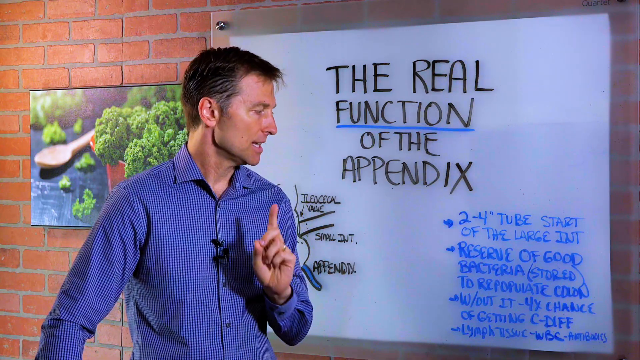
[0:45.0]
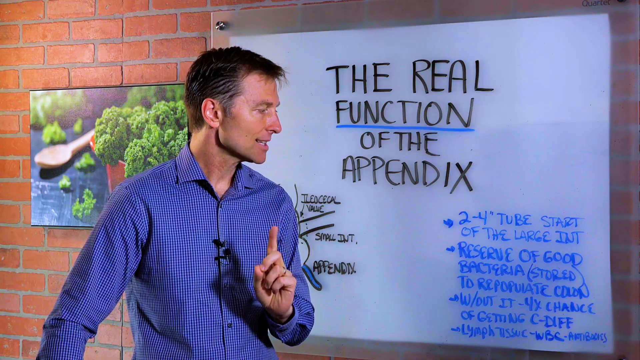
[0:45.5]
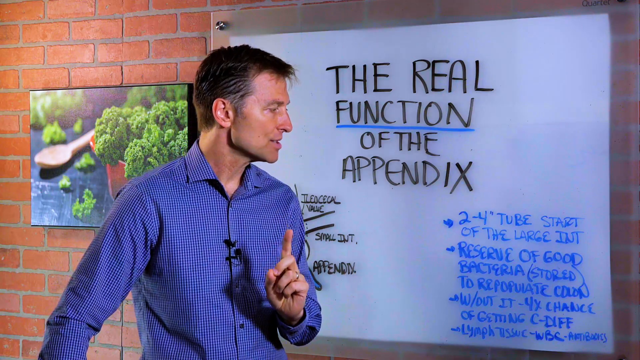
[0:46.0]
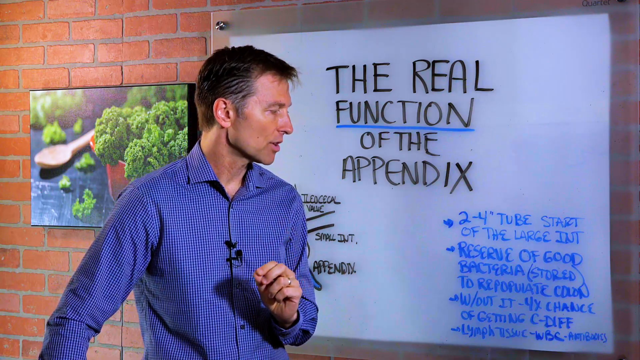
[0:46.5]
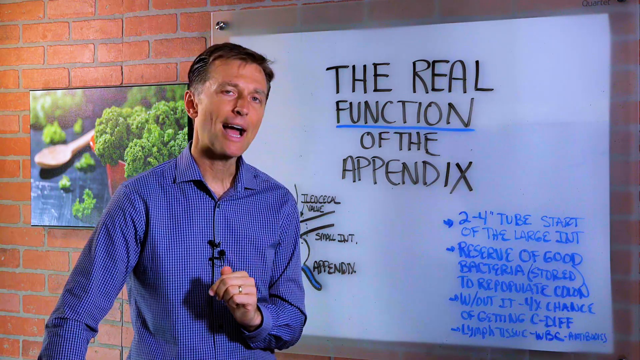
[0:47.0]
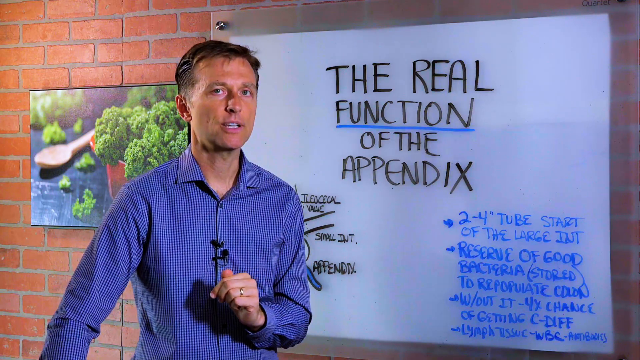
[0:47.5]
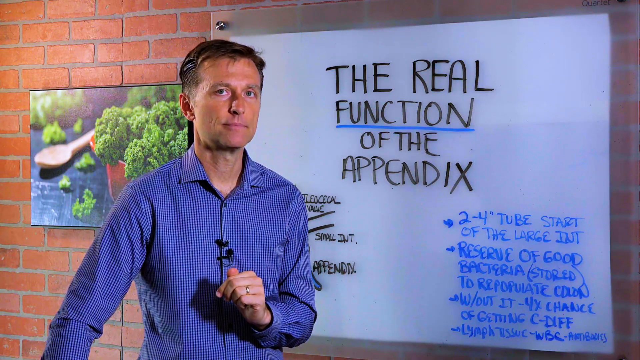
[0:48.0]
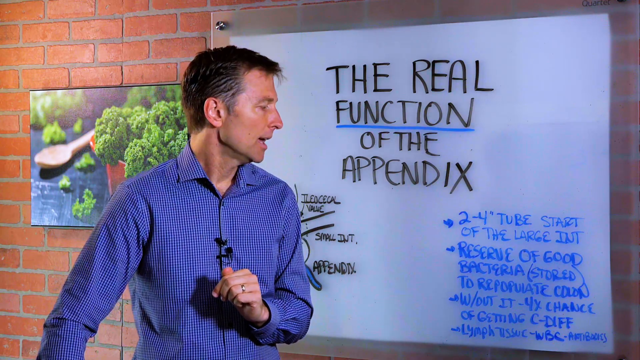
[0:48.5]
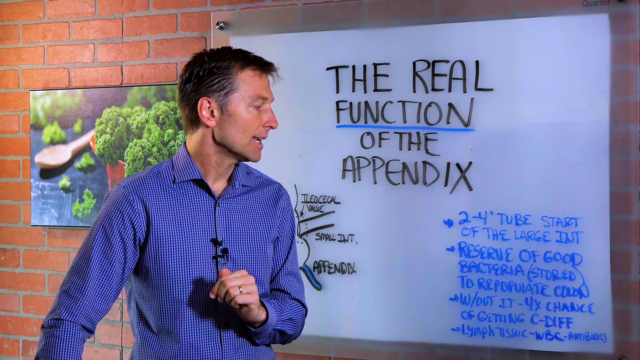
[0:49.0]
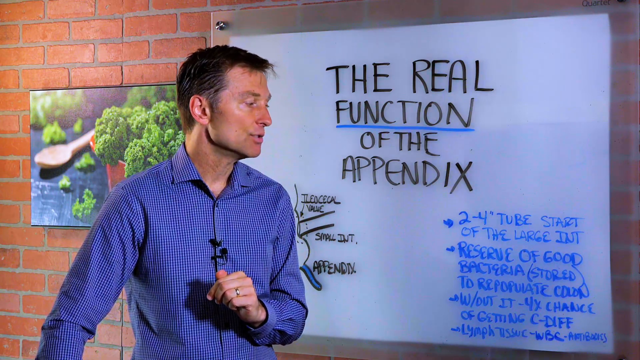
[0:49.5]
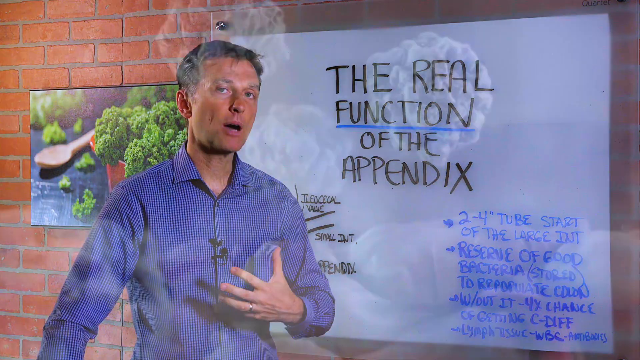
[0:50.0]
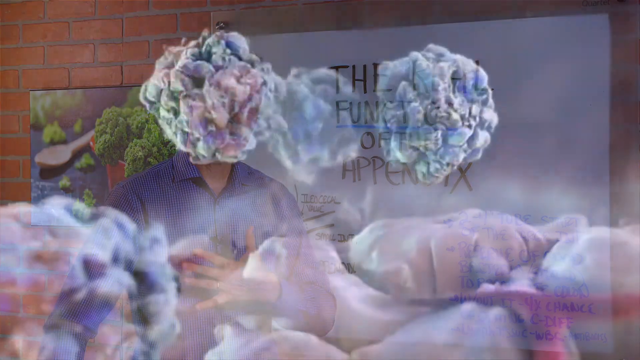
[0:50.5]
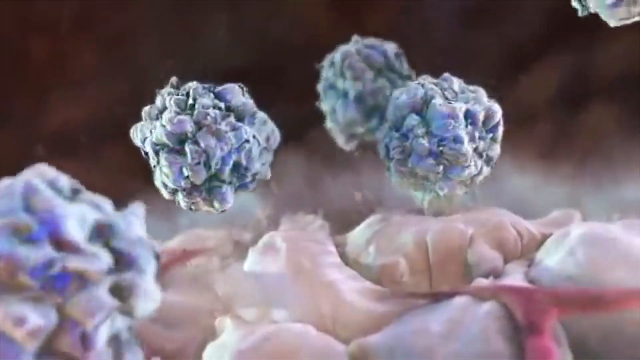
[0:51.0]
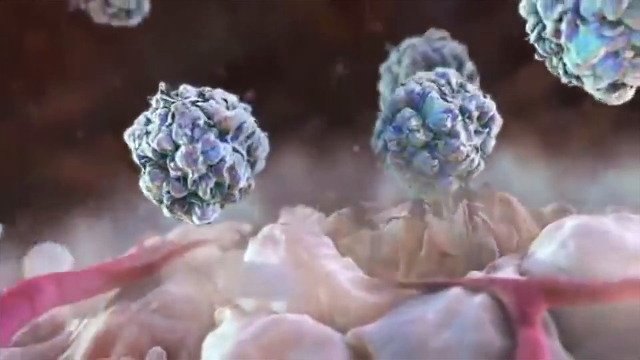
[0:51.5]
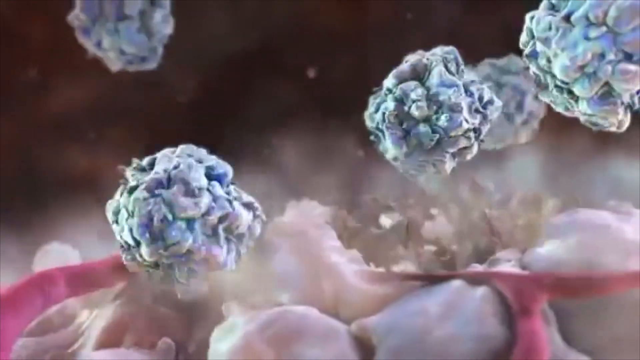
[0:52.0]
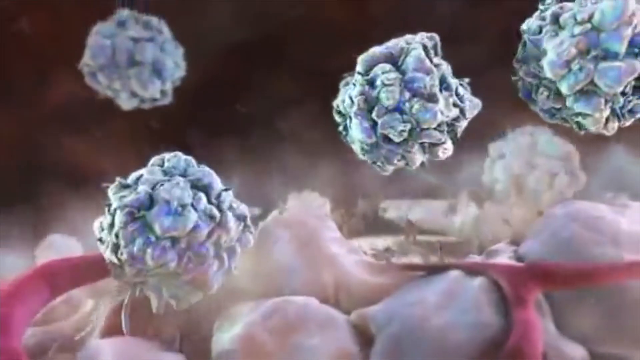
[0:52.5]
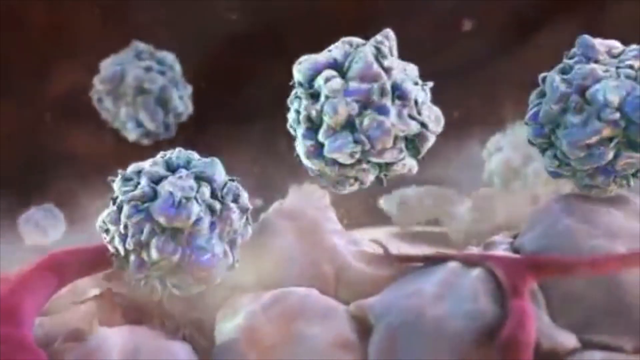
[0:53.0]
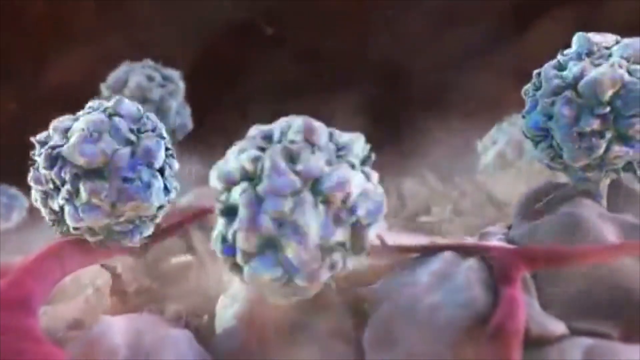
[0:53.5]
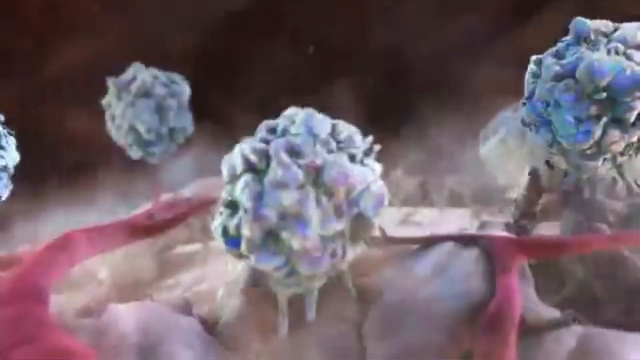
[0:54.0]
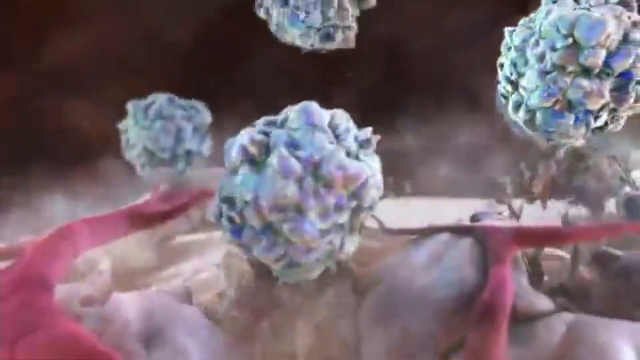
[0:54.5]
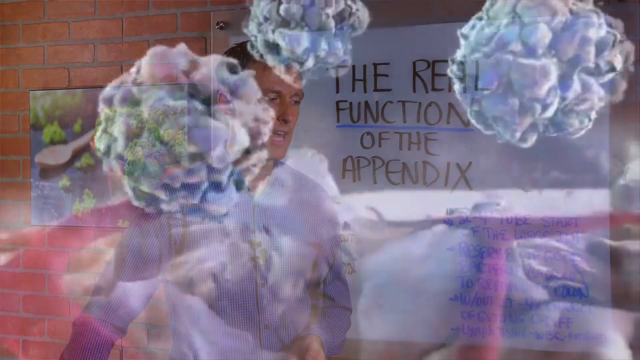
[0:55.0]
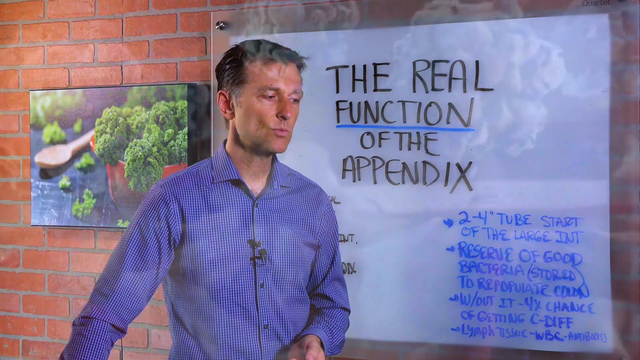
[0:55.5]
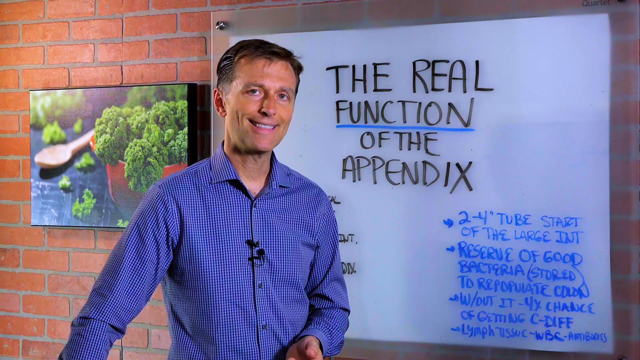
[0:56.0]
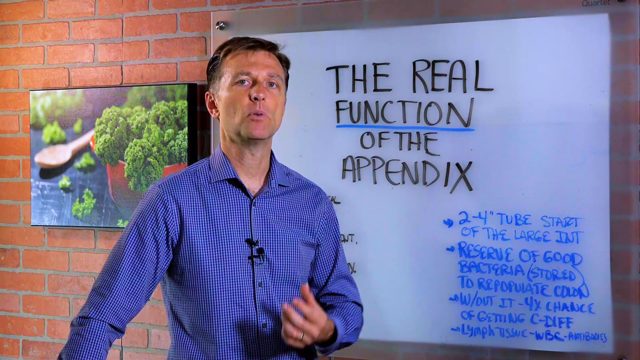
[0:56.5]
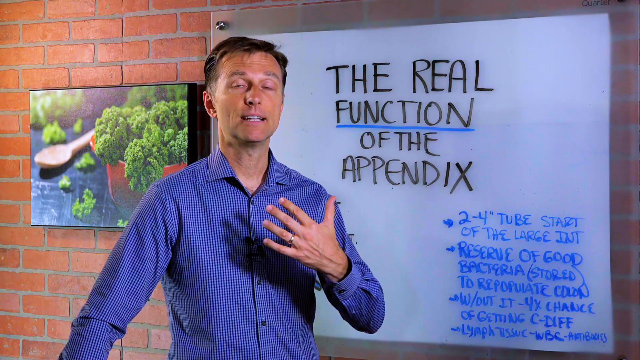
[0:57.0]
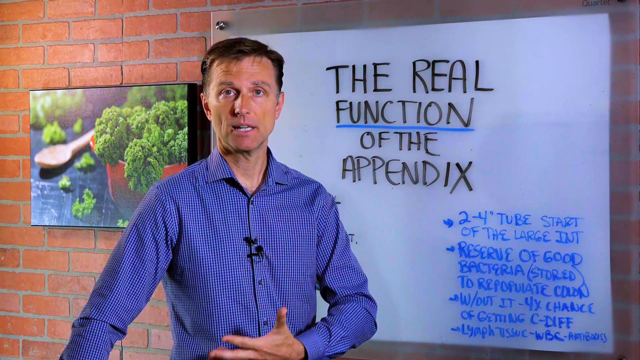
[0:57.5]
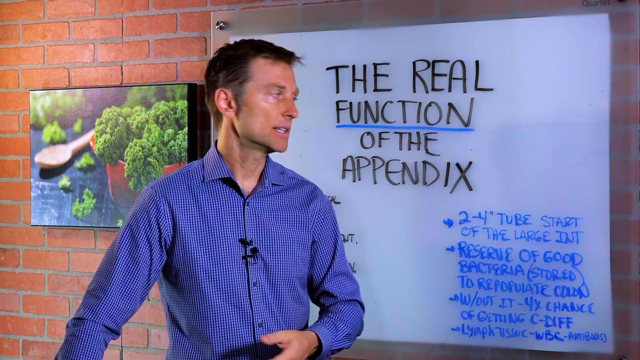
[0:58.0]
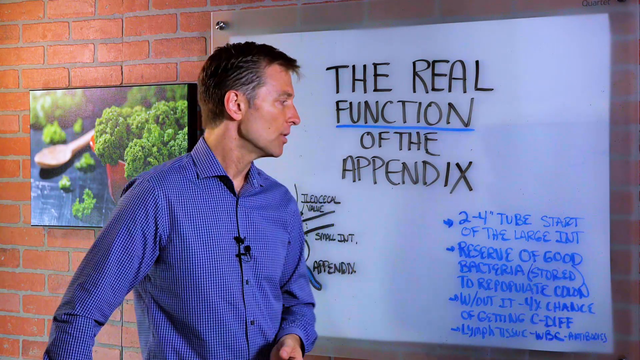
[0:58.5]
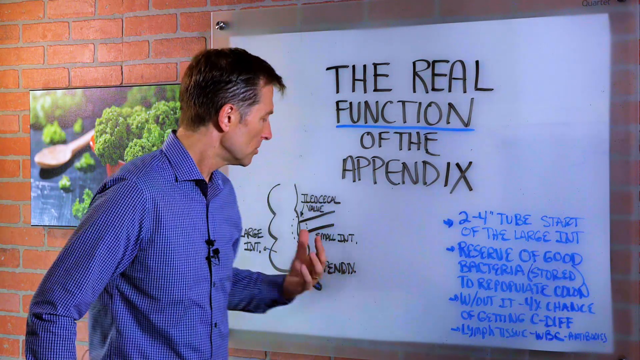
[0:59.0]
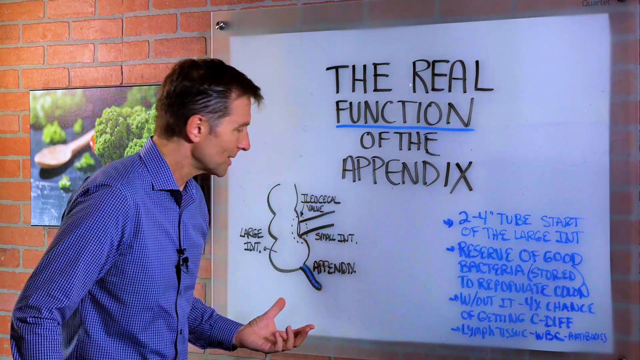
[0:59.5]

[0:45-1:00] The background behind the board is what seems to be a faux brick wall, the typical brick colour of an old schoolhouse, looking almost too perfect. An animated picture appears: silver, brain-shaped objects (not actual brains) move over a pinkish surface that looks like blood vessels or rocks, resembling bubble wrap. Little suckers come out from underneath the objects and poke the bubbles, popping them like little balloons; each object moves on to the next one, and another comes down and pokes it. One painting hangs on the wall behind the man; about three quarters of it is visible most of the time because he stands off to the left, with the screen on the other side.